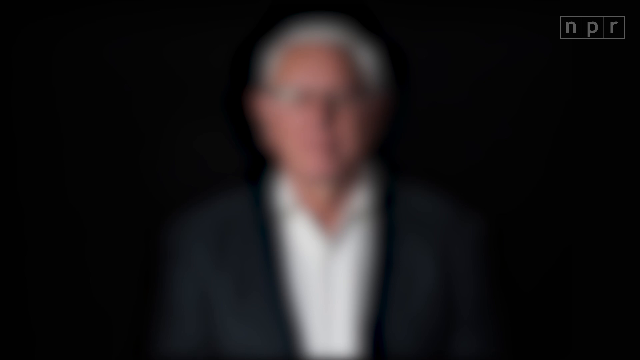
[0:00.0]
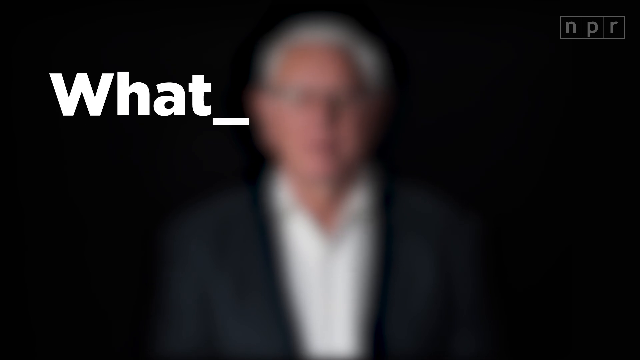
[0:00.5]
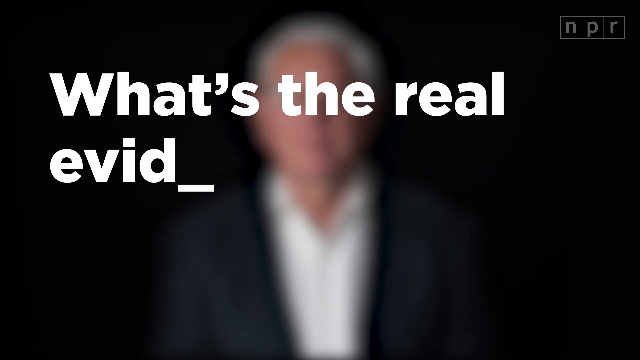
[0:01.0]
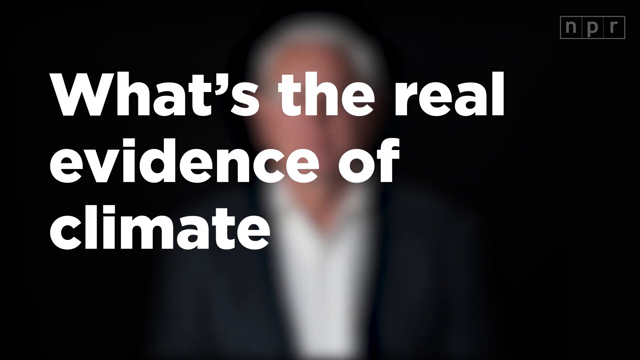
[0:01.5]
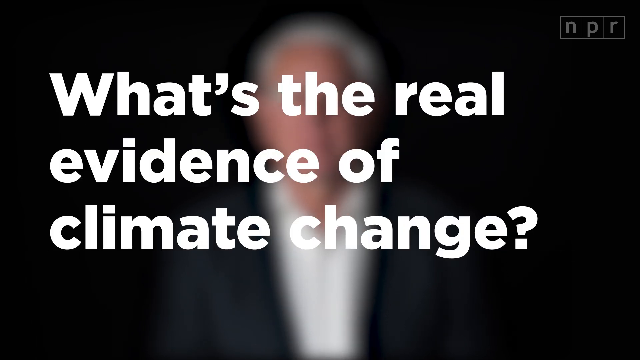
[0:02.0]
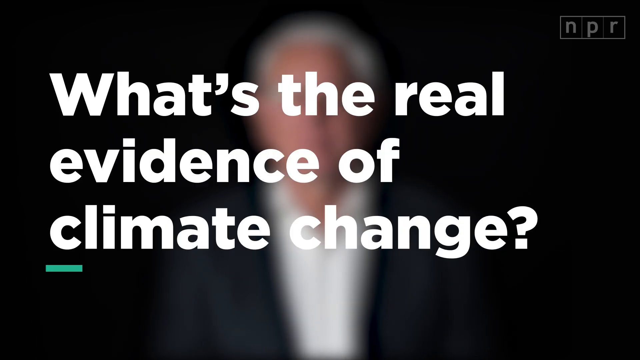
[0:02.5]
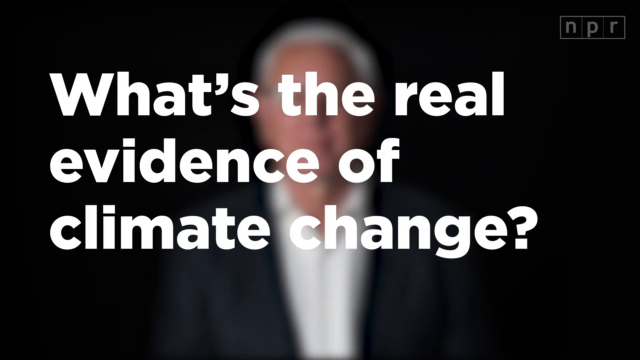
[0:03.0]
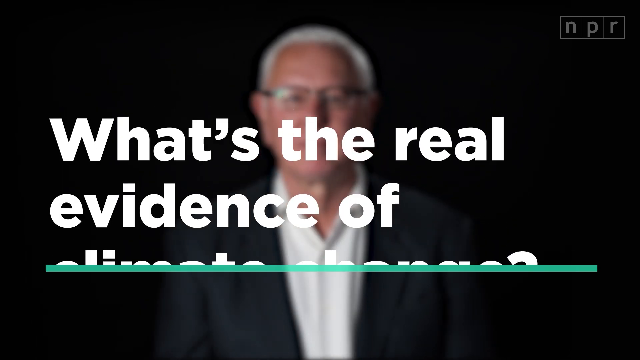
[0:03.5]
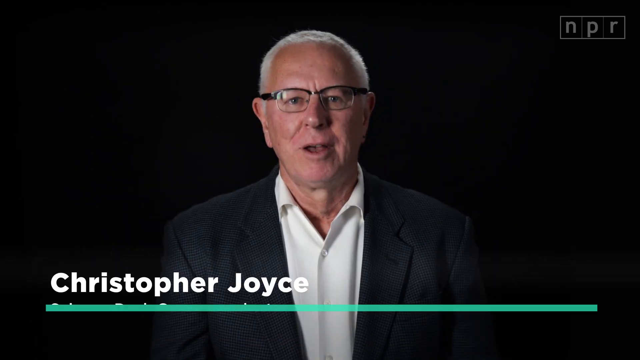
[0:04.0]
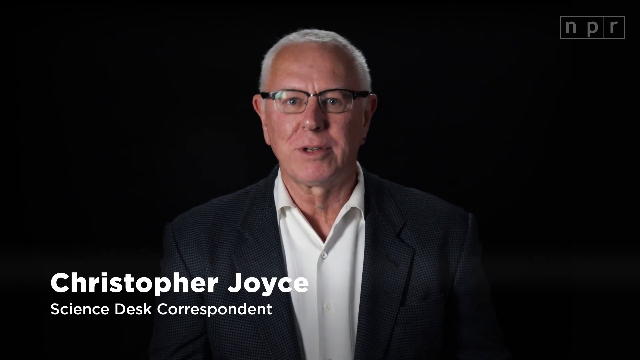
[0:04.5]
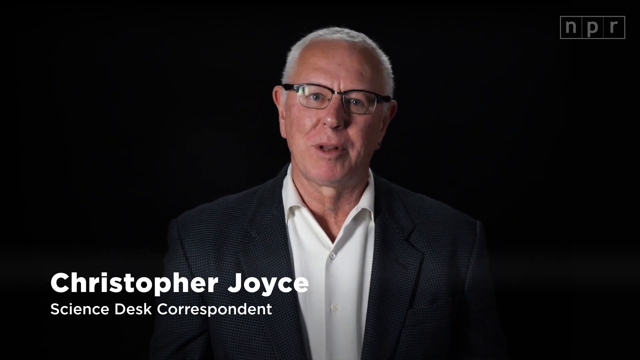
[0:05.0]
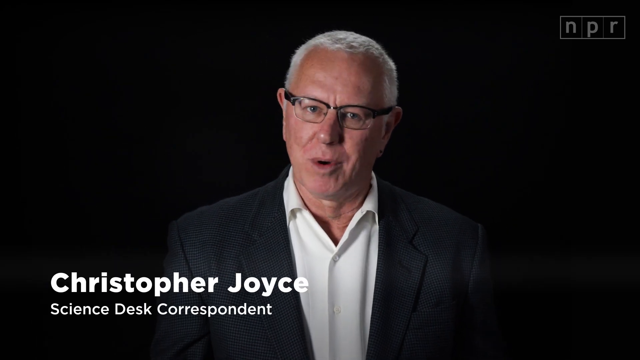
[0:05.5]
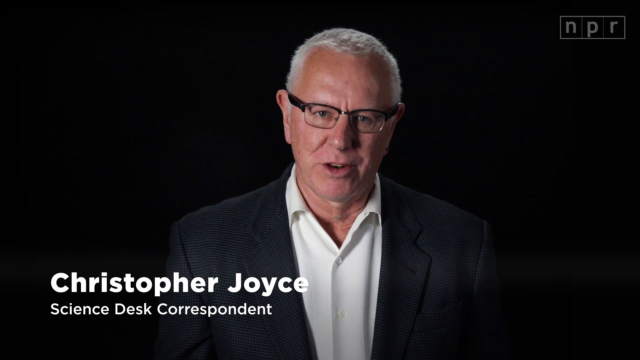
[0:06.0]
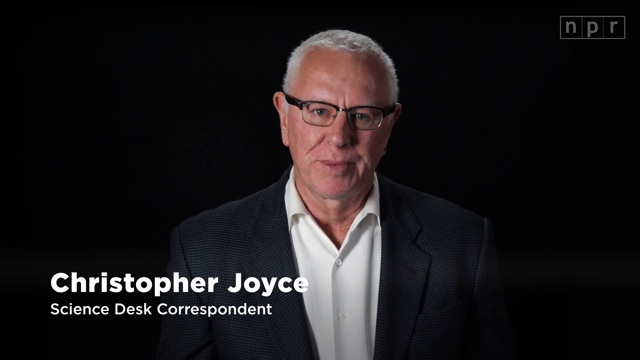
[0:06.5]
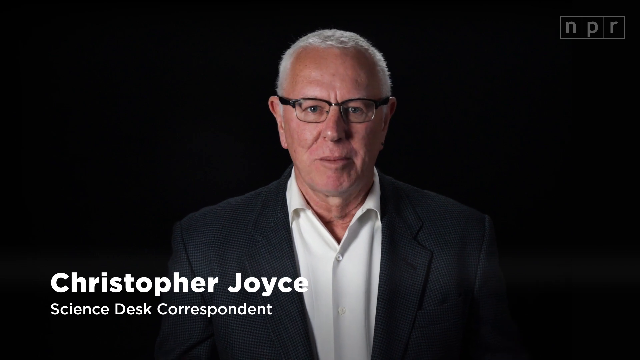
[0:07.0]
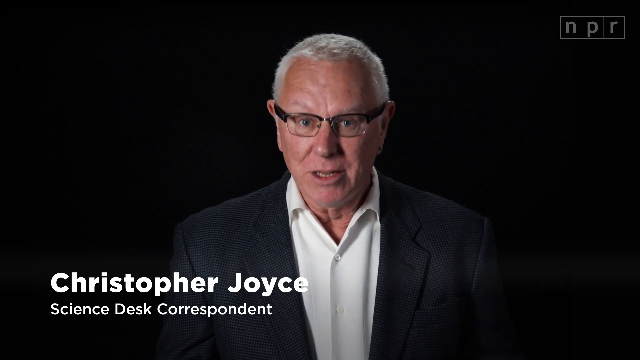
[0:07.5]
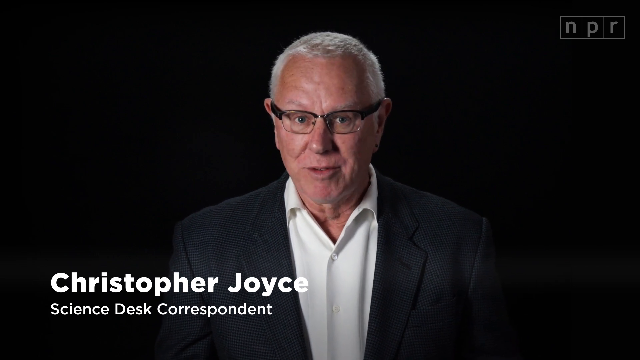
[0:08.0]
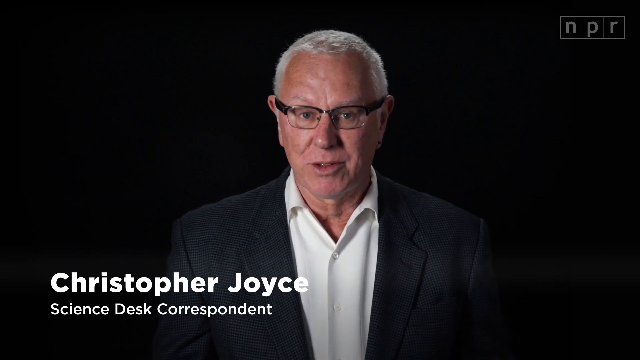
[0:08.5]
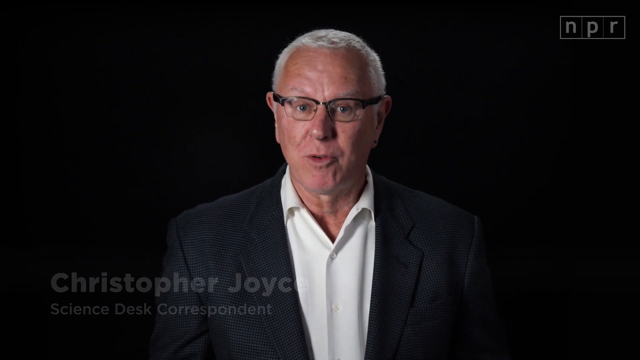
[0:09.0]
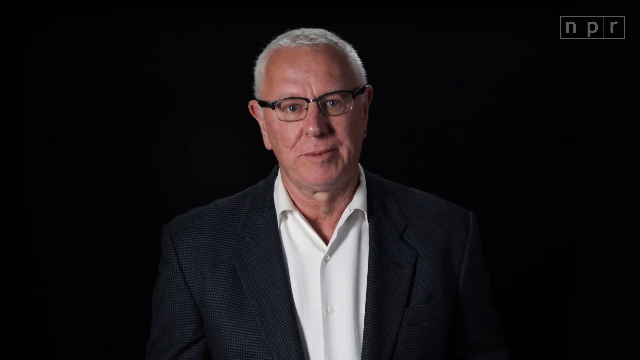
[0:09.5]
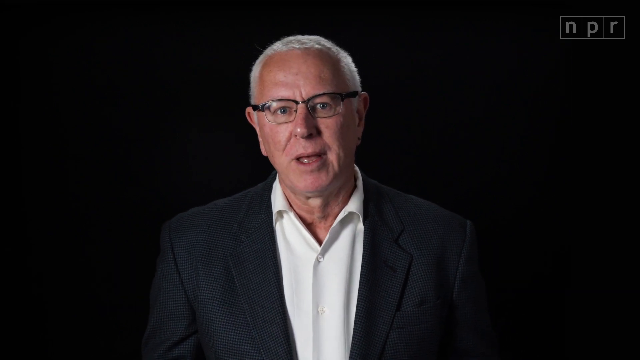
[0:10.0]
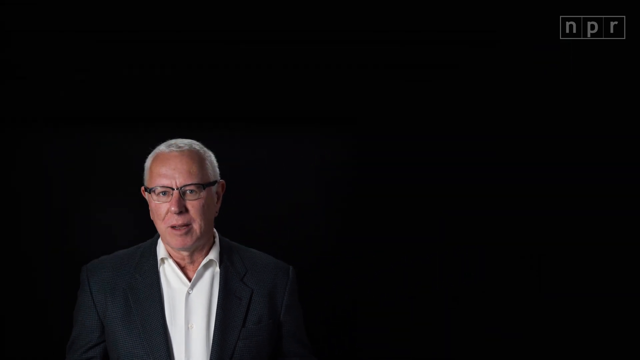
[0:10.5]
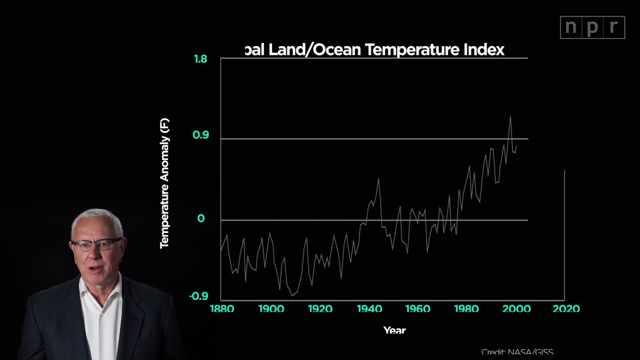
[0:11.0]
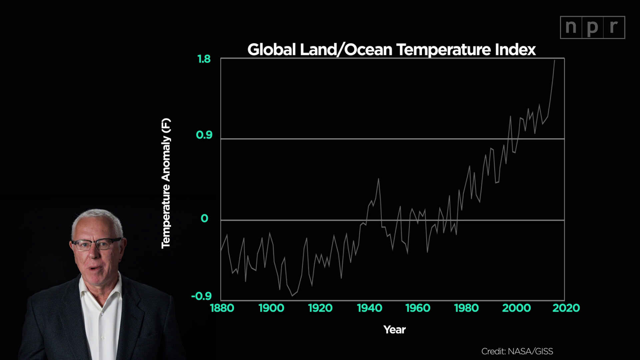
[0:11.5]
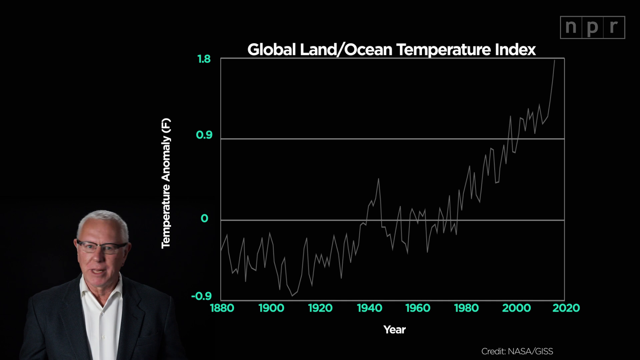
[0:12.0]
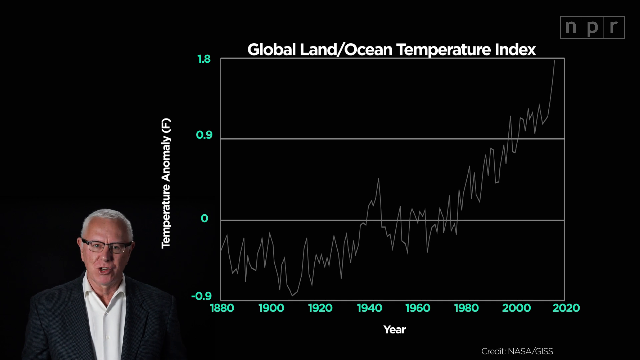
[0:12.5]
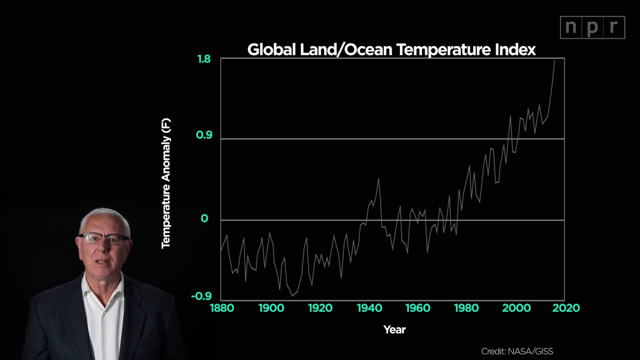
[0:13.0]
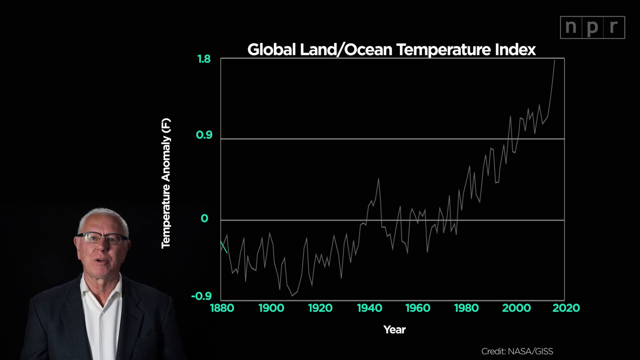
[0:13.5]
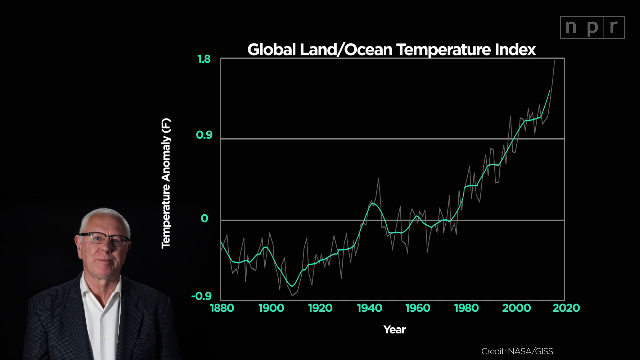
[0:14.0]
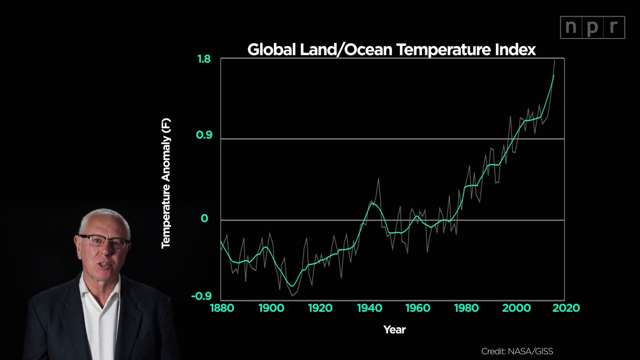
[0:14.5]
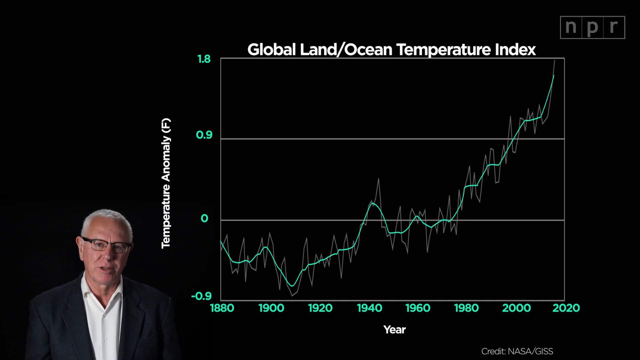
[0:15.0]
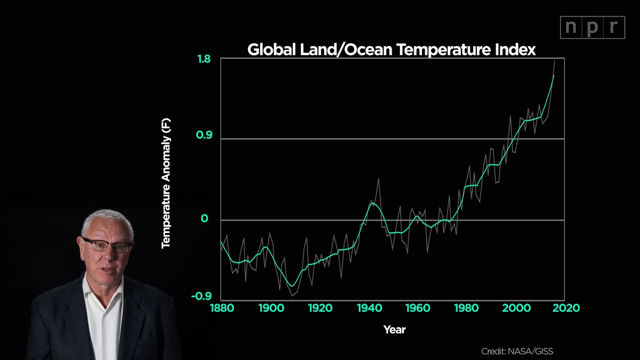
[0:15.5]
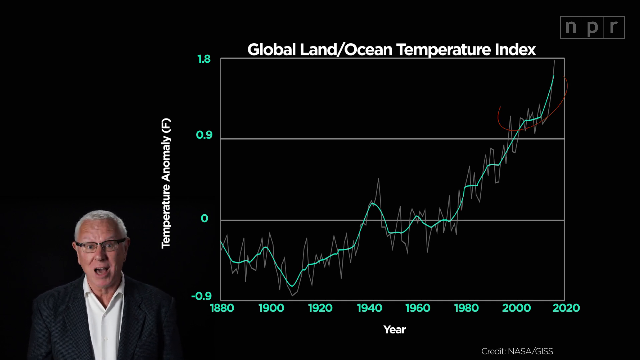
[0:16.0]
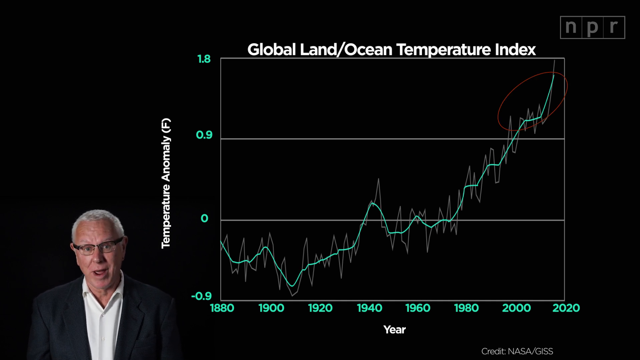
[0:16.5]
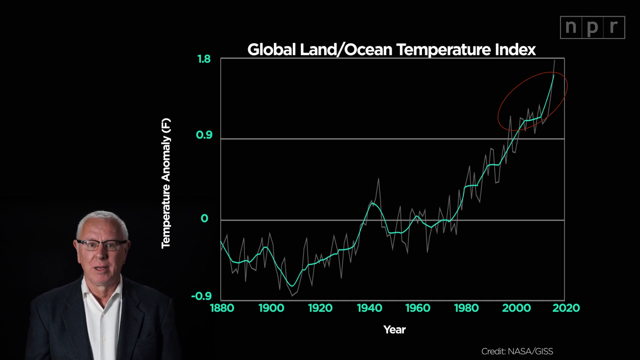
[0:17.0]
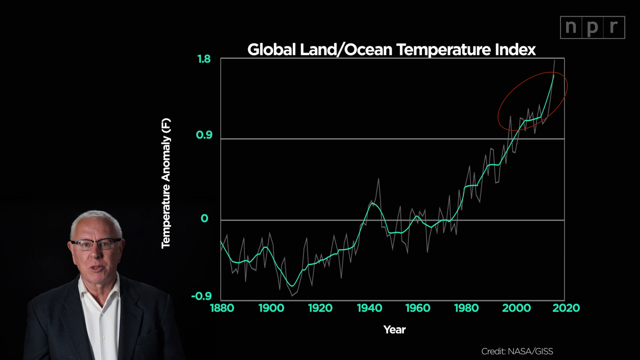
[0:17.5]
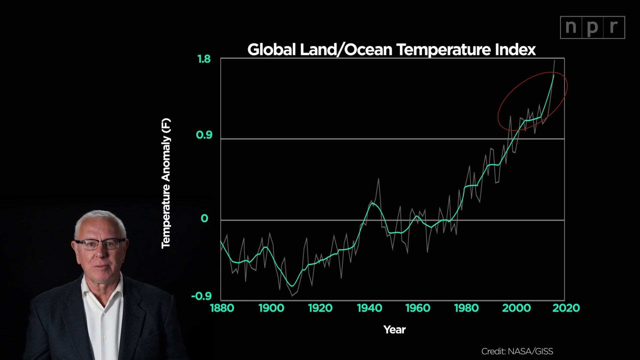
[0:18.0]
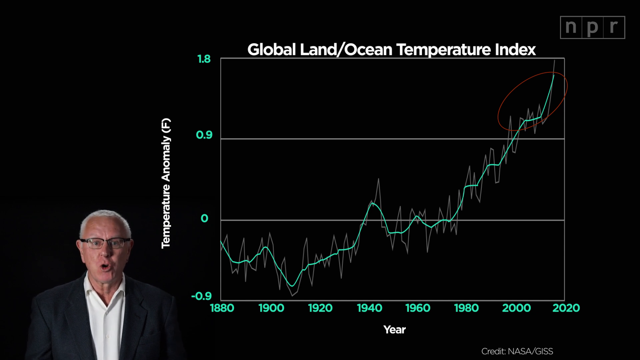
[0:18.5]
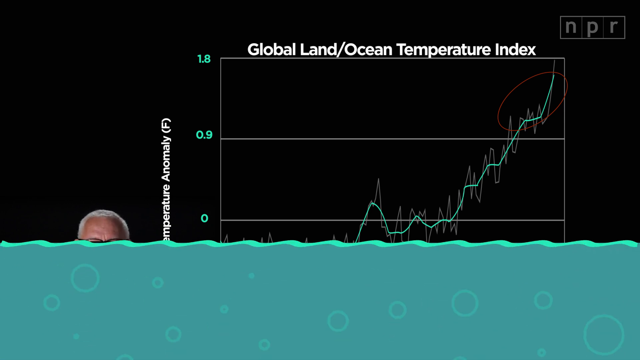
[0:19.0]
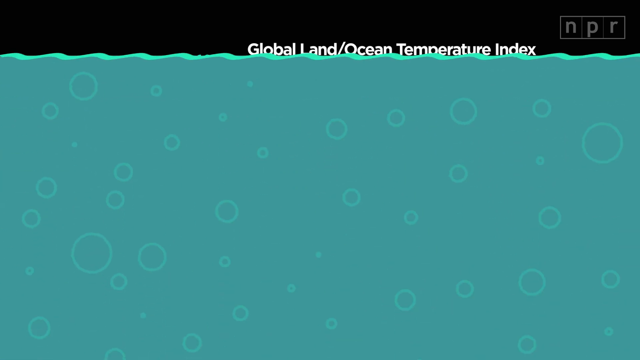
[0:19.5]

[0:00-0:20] The image is blurry, with a man visible in the background. In front of him, words slowly appear reading "What's the real evidence of climate change?" A line then comes up and the words disappear, and text in the lower left-hand corner reads "Christopher Joyce, science desk correspondent." When the man is shown, he has white hair, black-rimmed glasses, a white dress shirt and a black suit coat. He is Caucasian and looks like he could be maybe in his sixties; his age is hard to tell, but he is at least middle-aged or older. He wears no tie, and his dress shirt is unbuttoned one button at the top. The background then fills, with faint bubbles in it. The top of the screen is black for about an inch, and the whole bottom is blue and looks wavy at the top, showing that it is water.